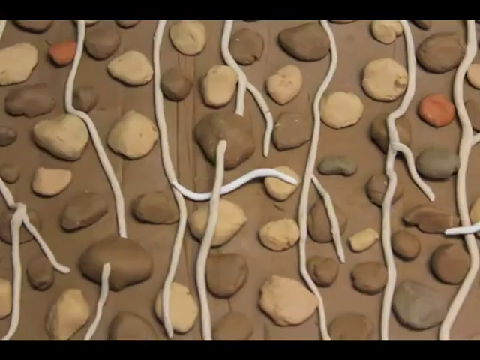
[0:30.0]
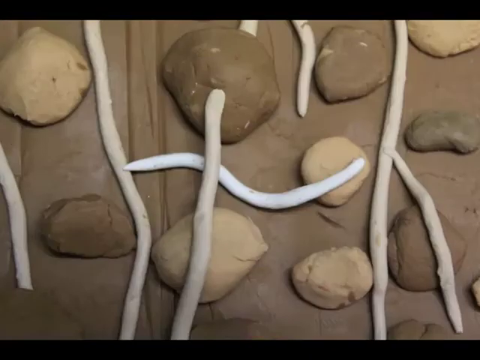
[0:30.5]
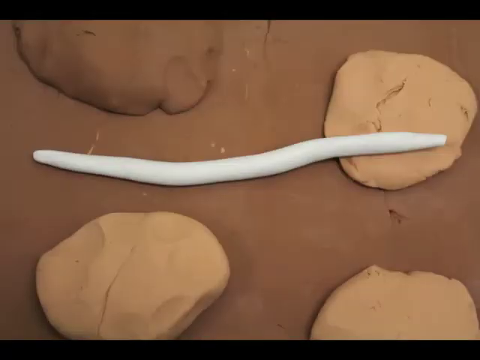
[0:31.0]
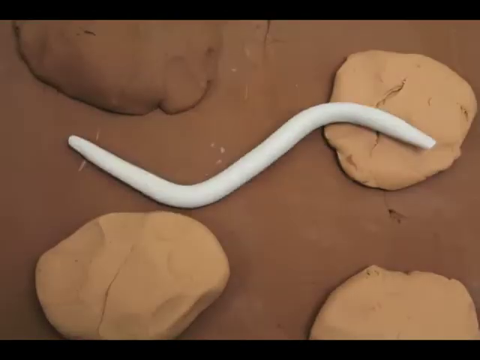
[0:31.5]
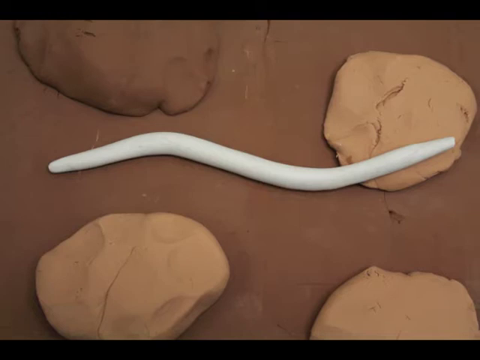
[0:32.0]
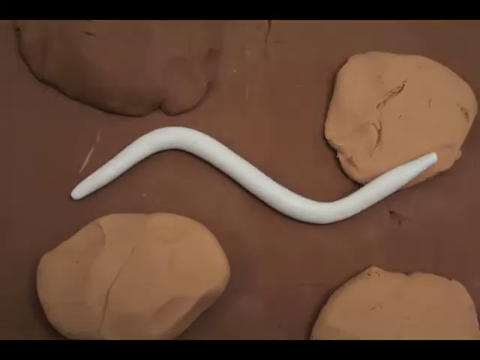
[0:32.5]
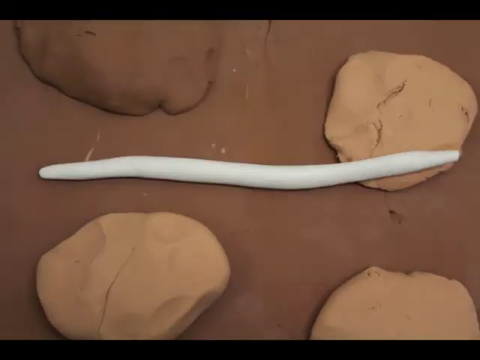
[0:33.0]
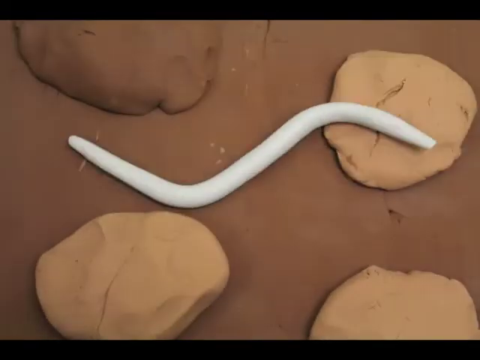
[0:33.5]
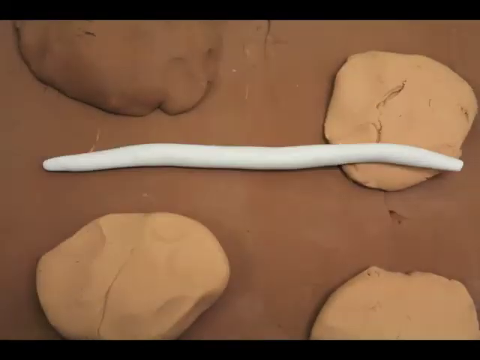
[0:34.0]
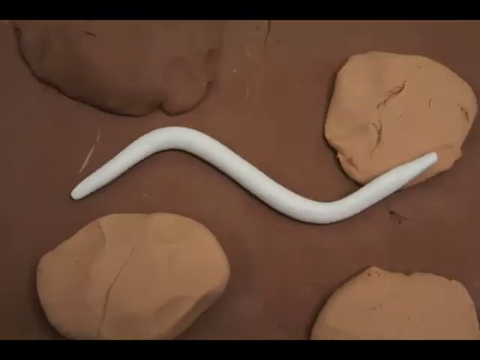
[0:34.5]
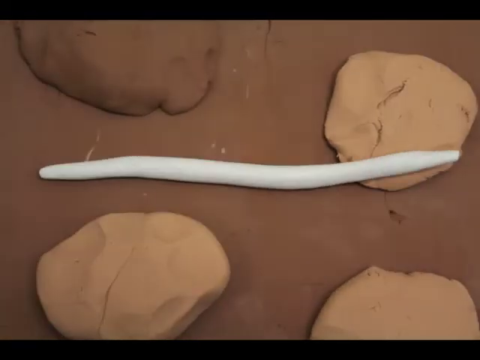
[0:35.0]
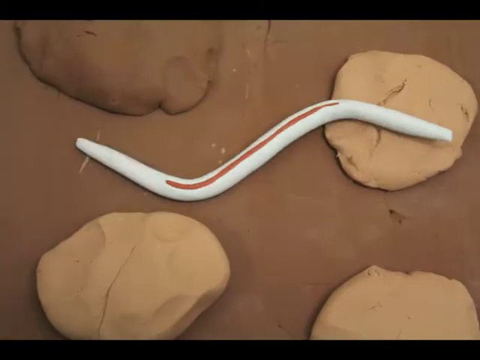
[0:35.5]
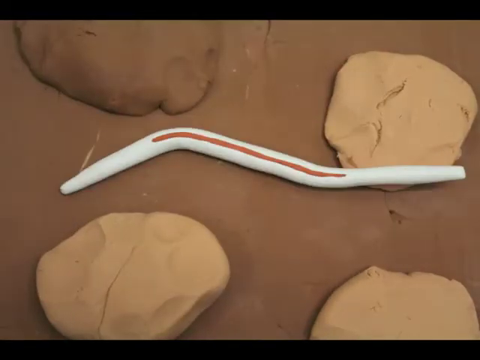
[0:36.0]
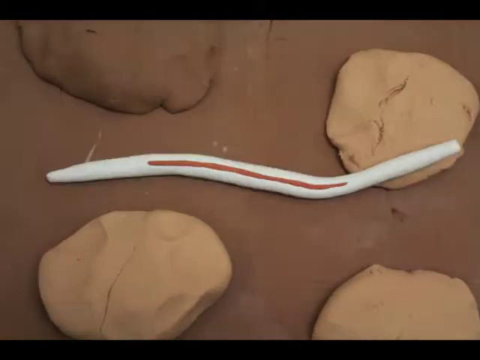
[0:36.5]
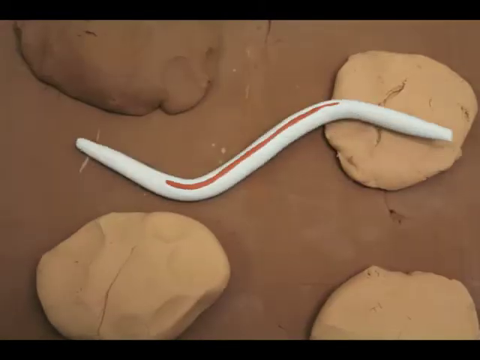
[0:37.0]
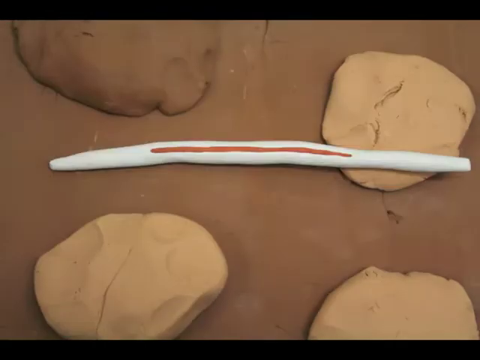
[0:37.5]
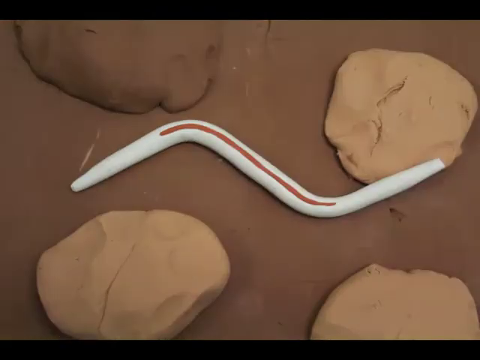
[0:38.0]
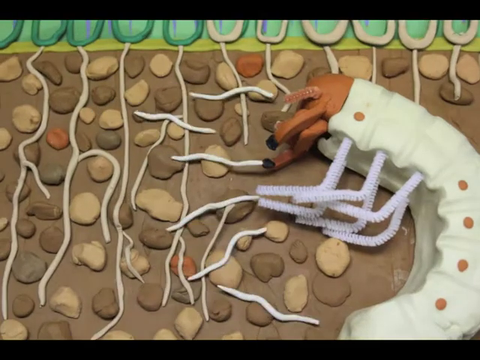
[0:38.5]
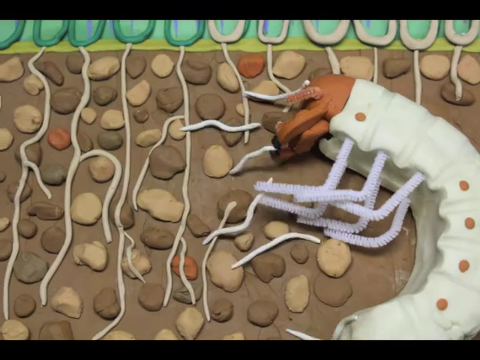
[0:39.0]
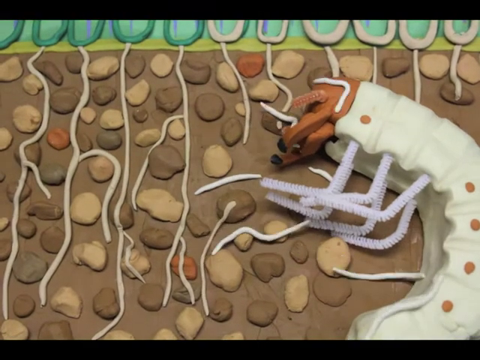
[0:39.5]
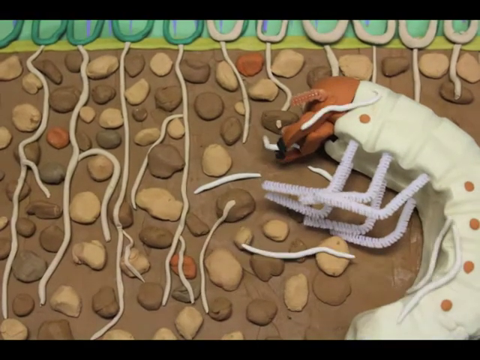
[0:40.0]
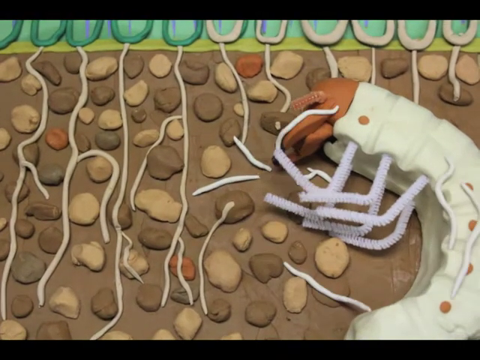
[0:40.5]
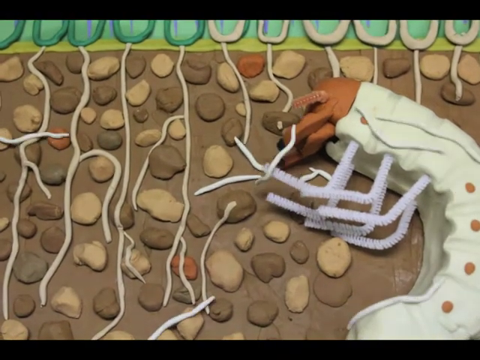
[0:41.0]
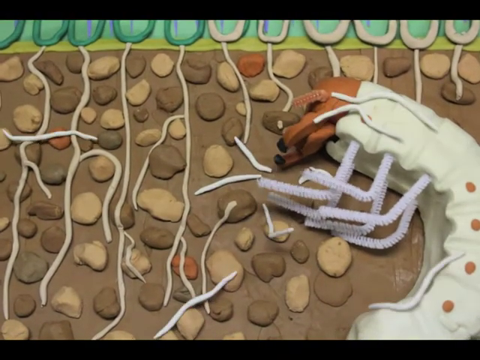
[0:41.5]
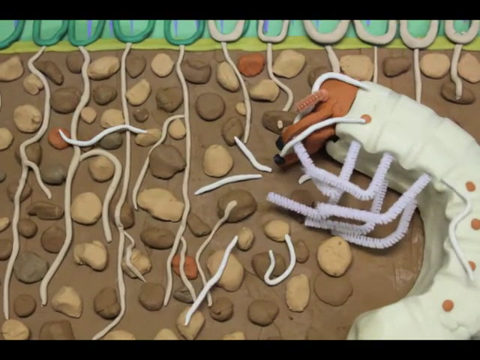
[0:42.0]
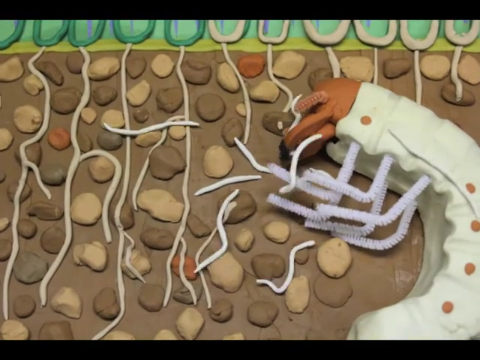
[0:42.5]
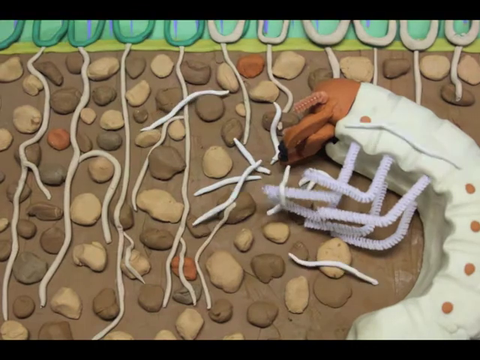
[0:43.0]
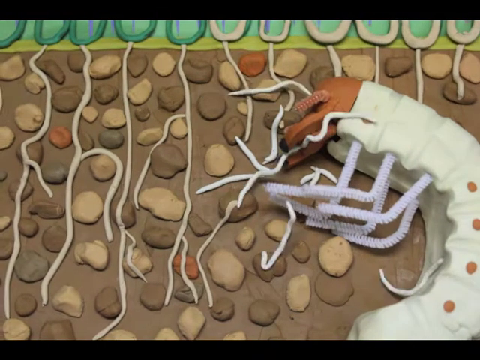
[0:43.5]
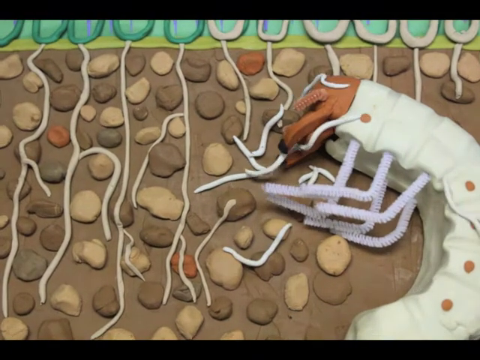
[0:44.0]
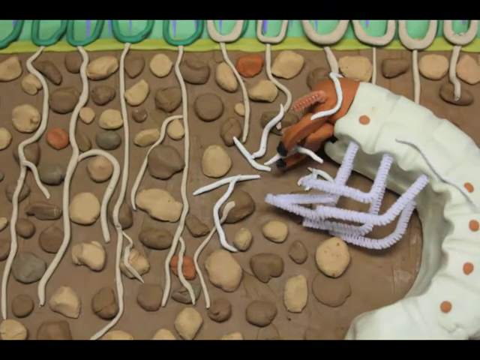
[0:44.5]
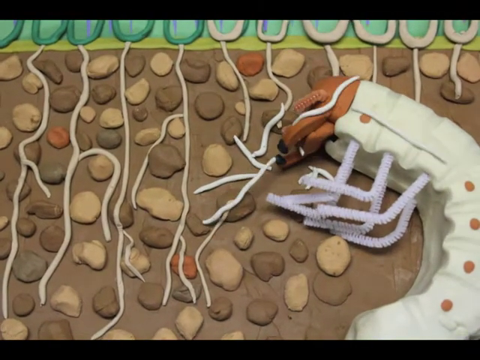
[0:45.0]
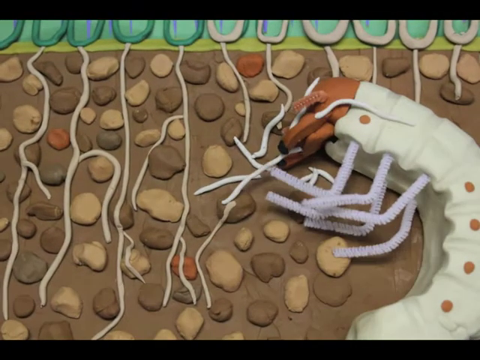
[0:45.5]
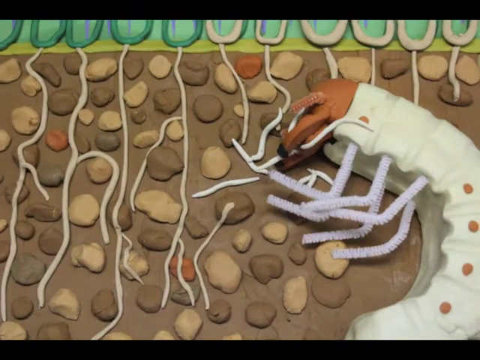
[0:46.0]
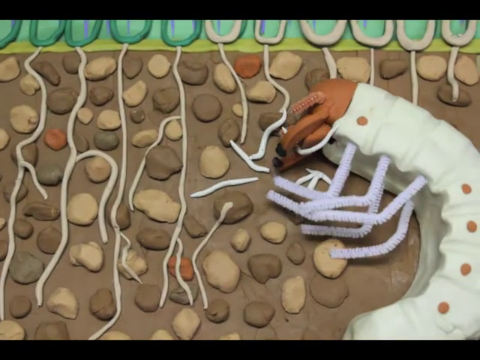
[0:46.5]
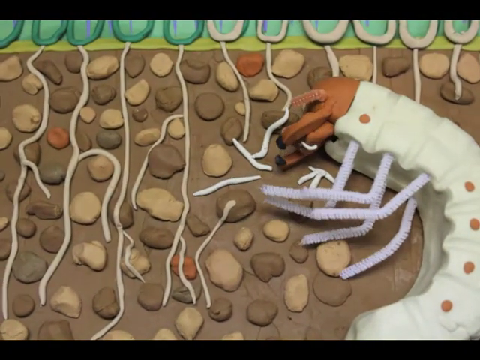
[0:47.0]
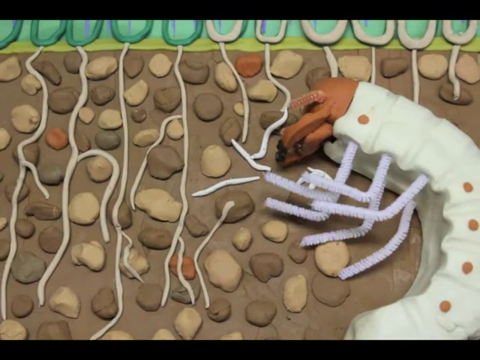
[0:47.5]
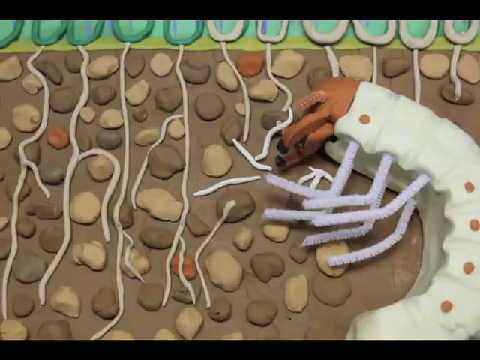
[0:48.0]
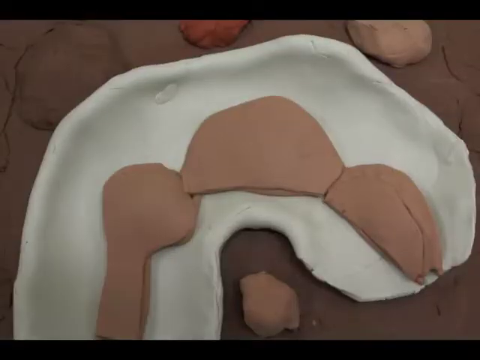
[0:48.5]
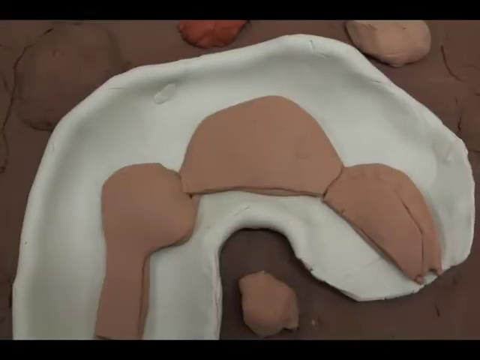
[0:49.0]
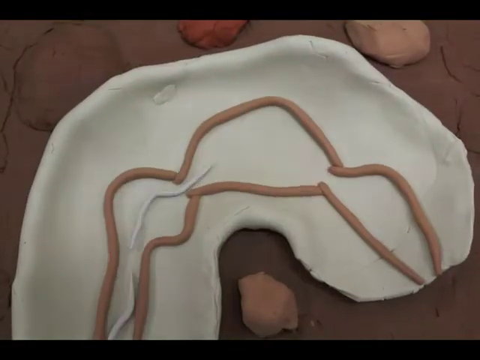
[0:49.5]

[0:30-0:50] The white clay worms move from left to right through the soil toward the entomopathogenic nematode. A close-up shows the clay soil and one of the worms, or a larva, wiggling through it, while some sort of light flashes in the background. A bright red or orange line then appears on the worm. The worms then seem to attack the larger larva, climbing onto and around the large white and orange larva, and they seem to climb into its mouth and digestive tract. The background is unchanged: dark and light brown, beige and orange clay soil. The plants above the soil line are not visible here, but the roots of the plants are still visible.